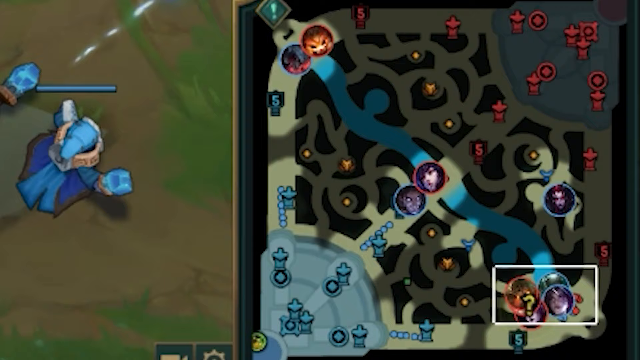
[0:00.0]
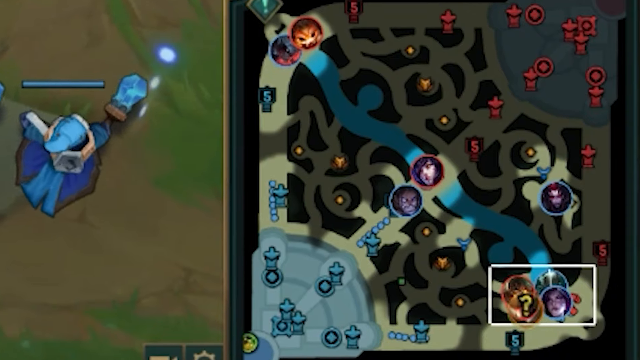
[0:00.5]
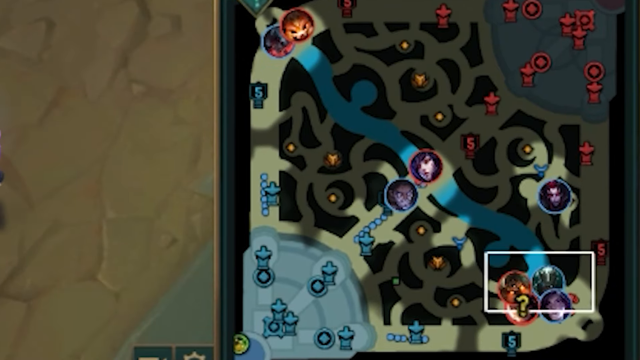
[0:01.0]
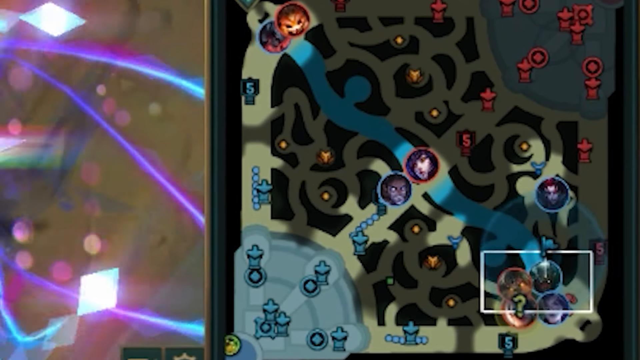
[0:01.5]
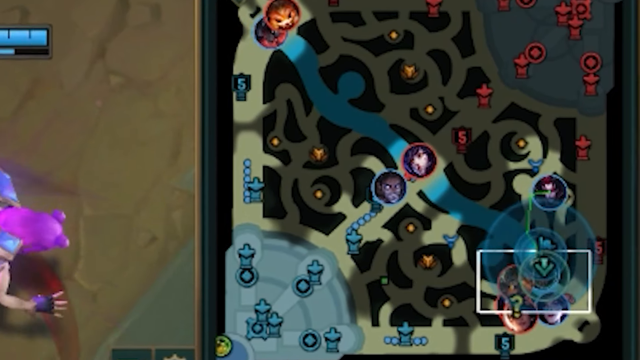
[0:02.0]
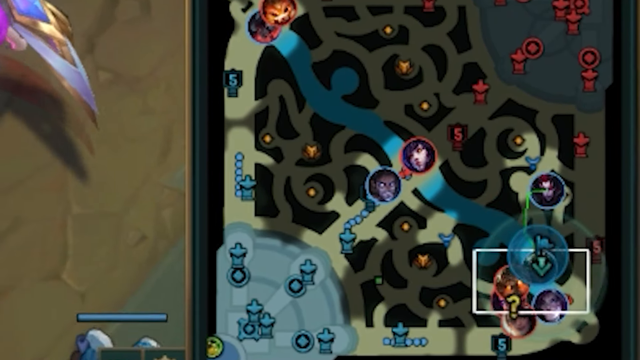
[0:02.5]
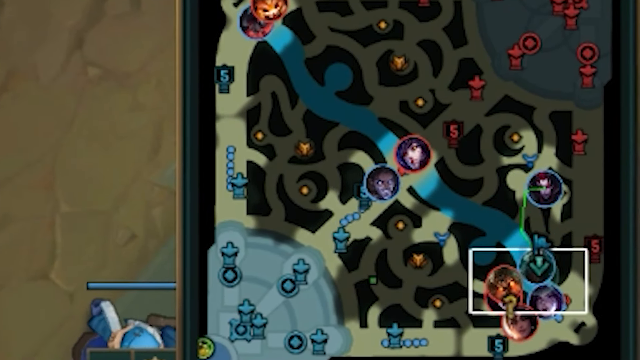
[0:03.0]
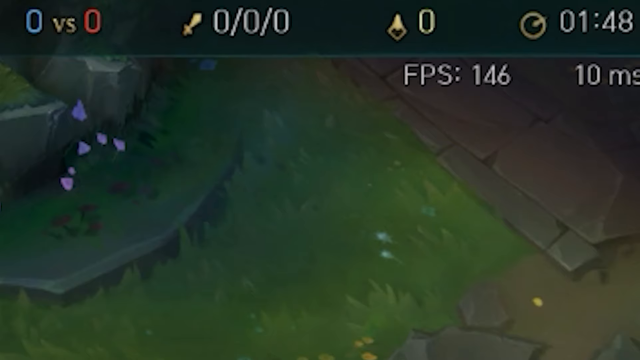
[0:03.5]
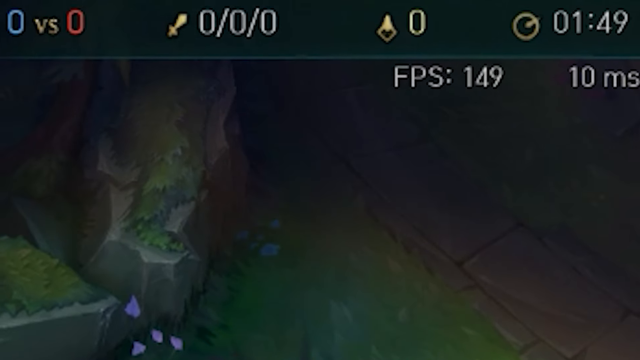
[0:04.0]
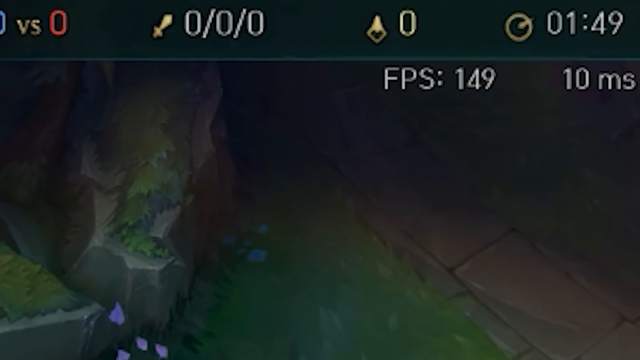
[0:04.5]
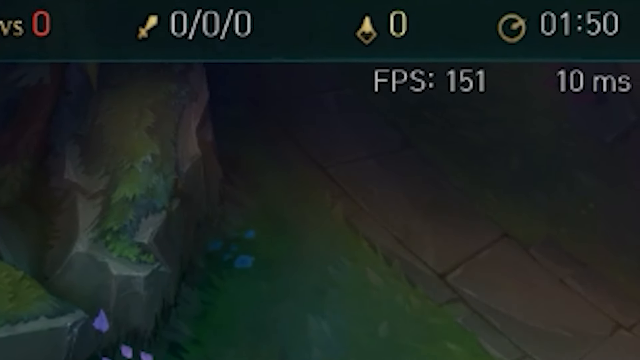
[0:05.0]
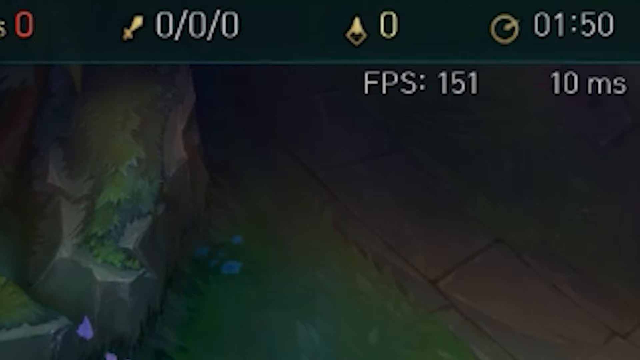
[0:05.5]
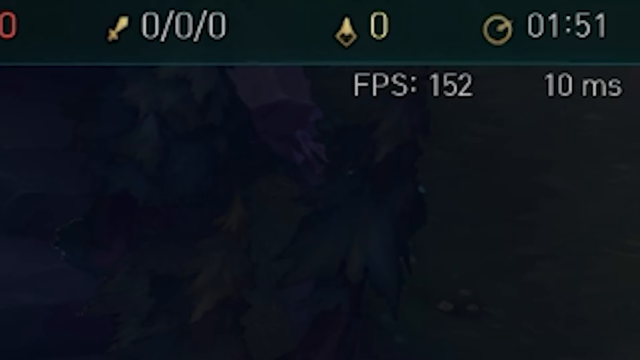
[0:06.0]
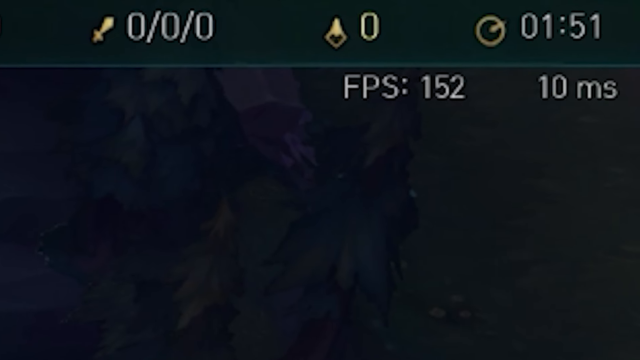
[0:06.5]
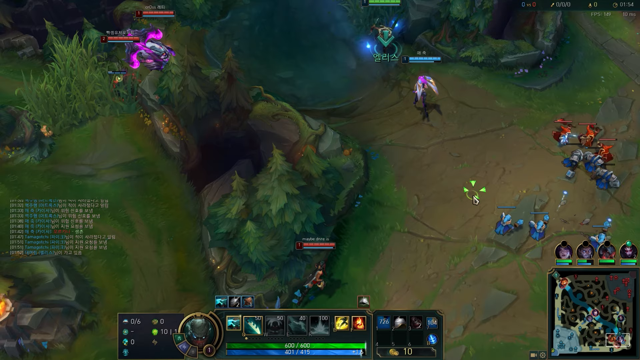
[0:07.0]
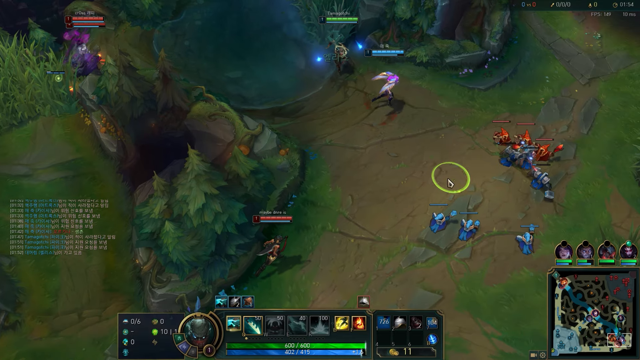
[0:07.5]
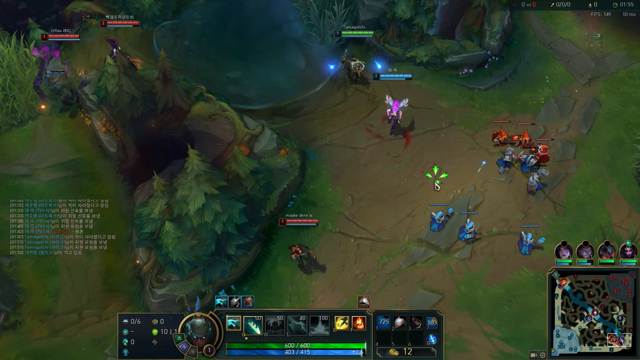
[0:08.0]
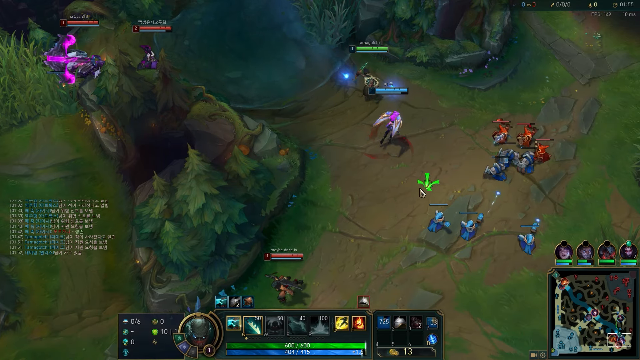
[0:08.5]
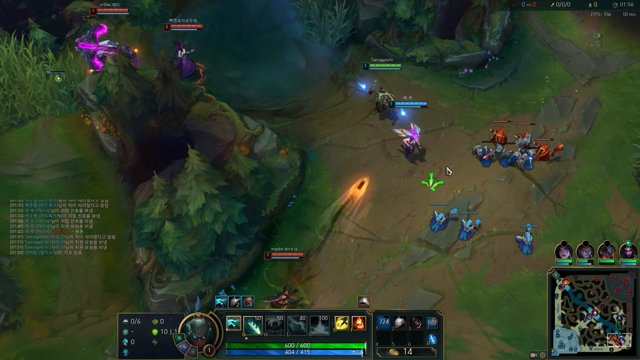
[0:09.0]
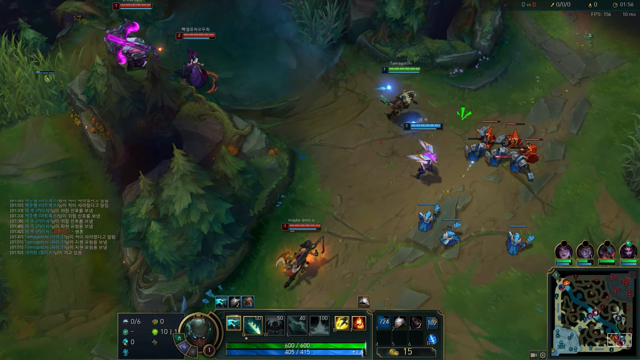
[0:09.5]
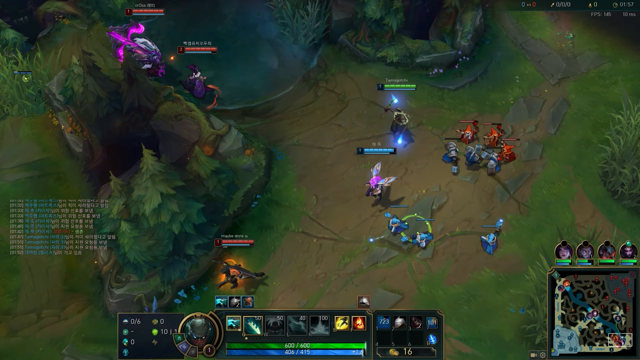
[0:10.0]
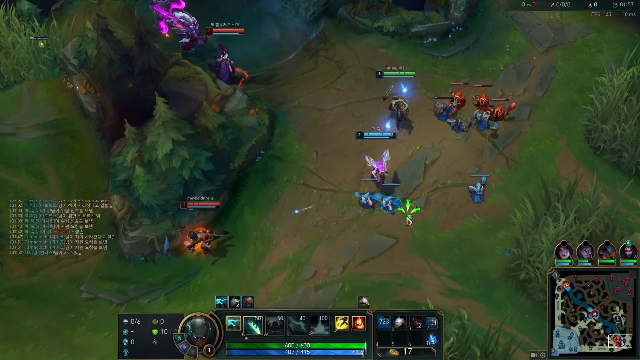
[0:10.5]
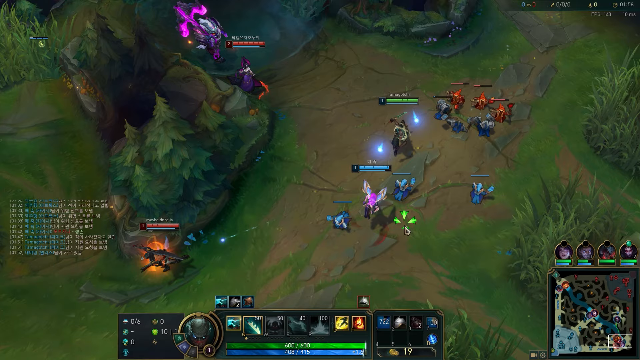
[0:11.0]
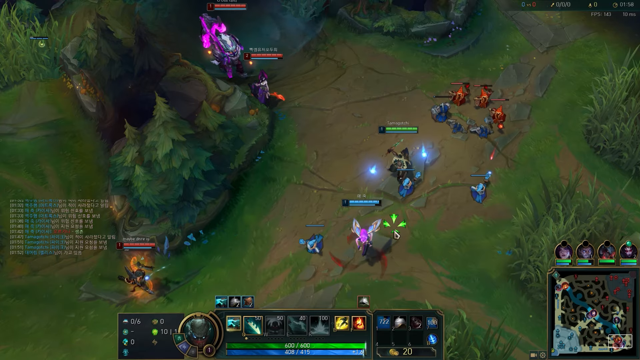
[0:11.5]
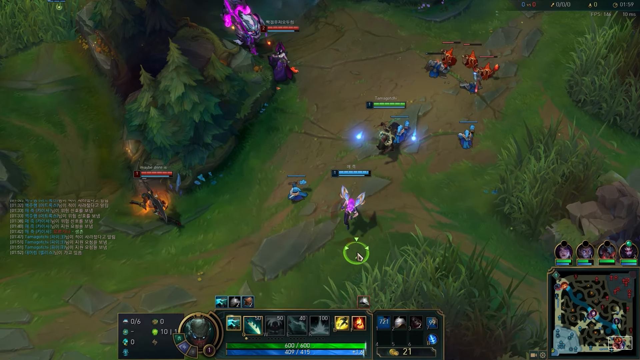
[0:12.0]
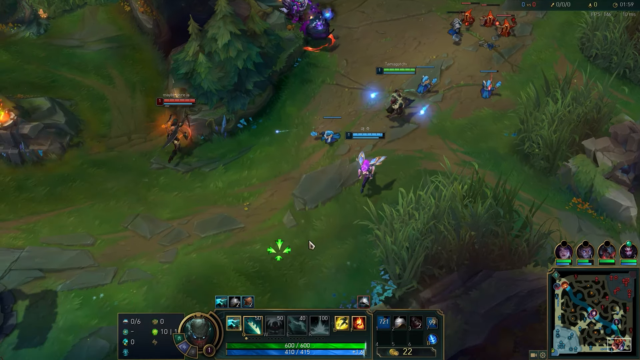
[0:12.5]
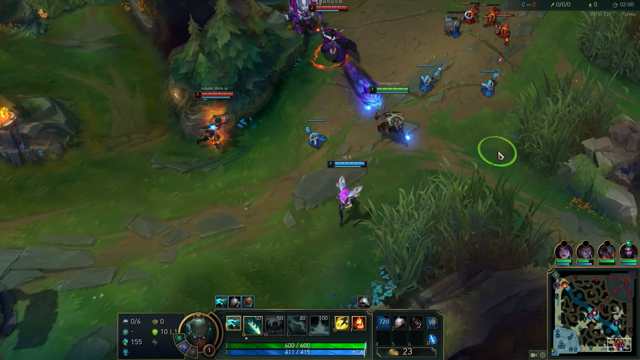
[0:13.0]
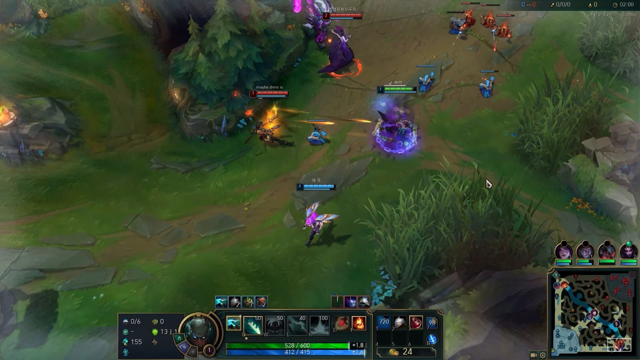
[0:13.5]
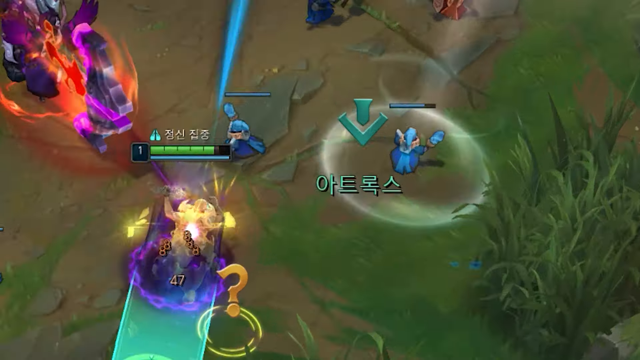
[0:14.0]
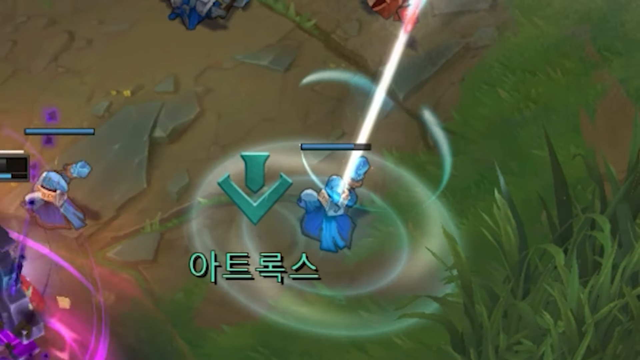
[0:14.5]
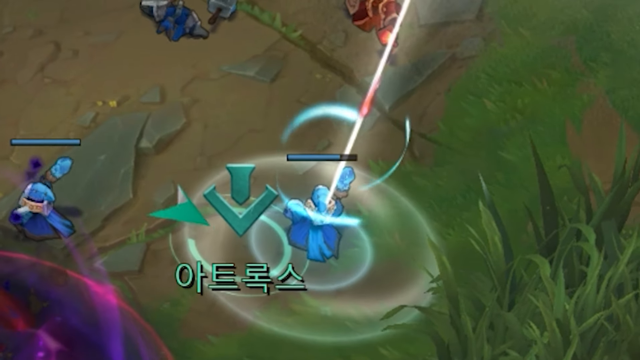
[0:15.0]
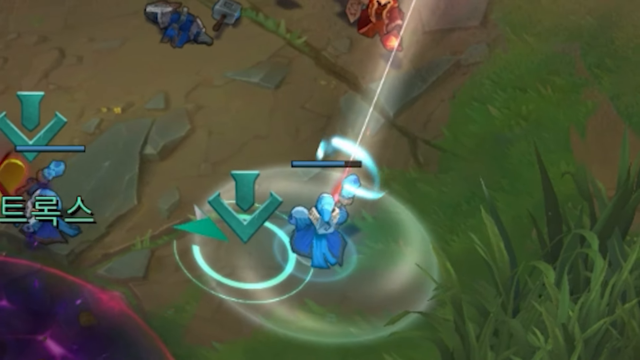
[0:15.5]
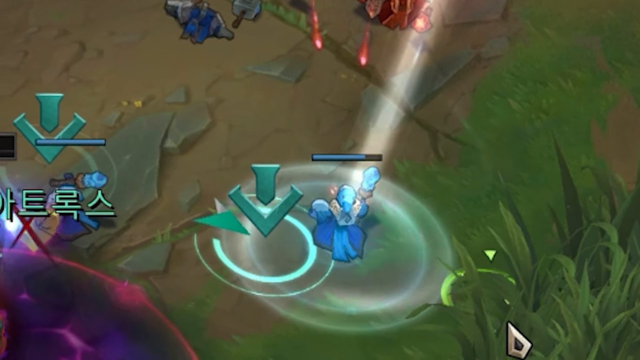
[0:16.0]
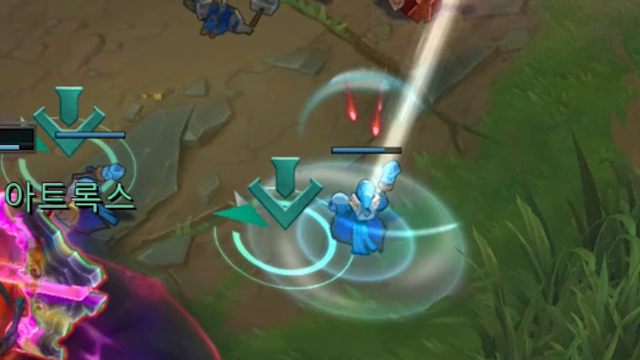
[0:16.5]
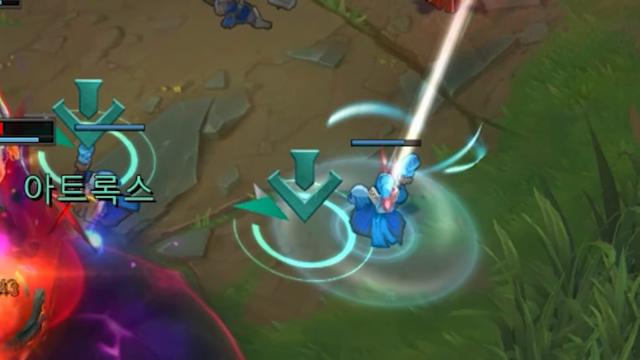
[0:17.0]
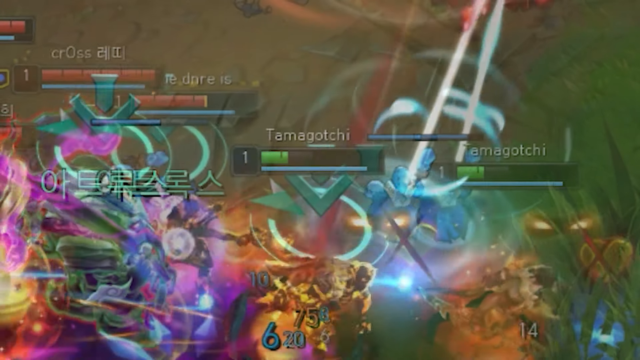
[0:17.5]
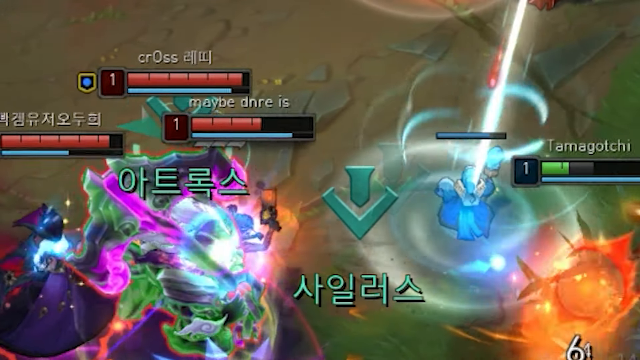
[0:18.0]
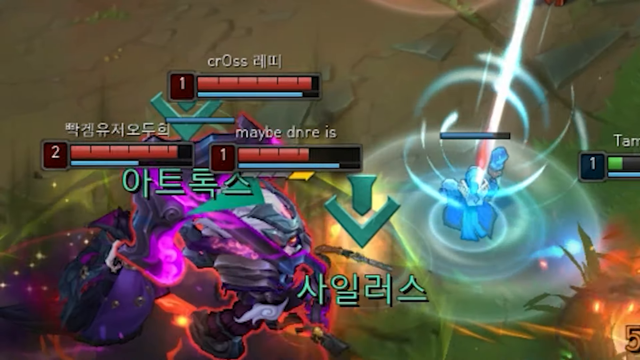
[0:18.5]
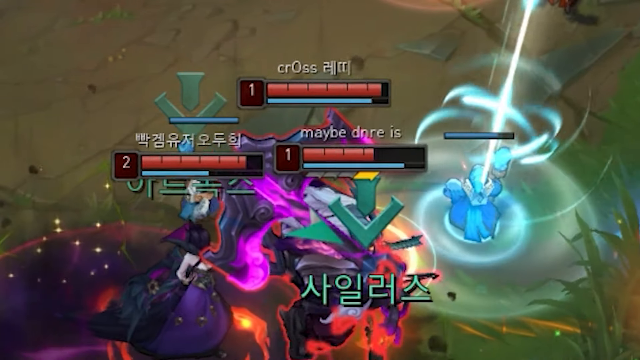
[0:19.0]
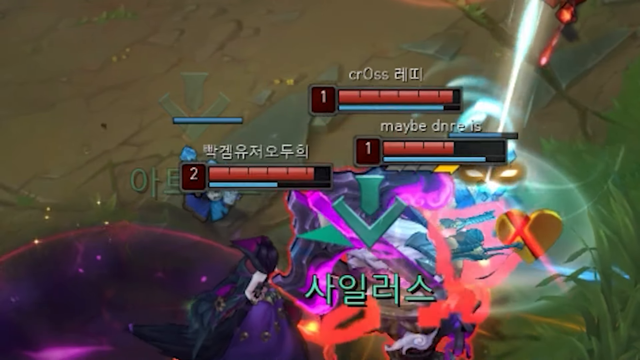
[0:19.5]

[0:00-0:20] The video shows a game called Avengers Assemble, which looks like a standard video game. Characters run around, fight each other, and take each other's stuff. At the beginning, the view is zoomed in on what is presumably something special the player has. A lot of writing on the screen appears to be Korean, suggesting this is a Korean video game. Multiple people fight each other on the battlefield, which has green grass and stone on the ground, along with some trees that appear to be evergreens.